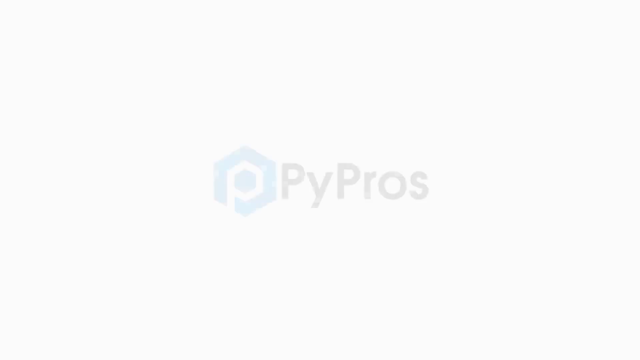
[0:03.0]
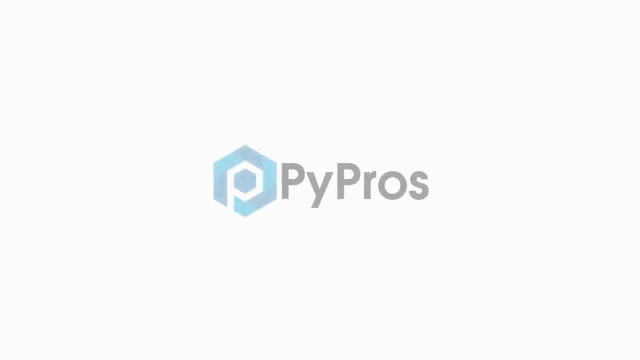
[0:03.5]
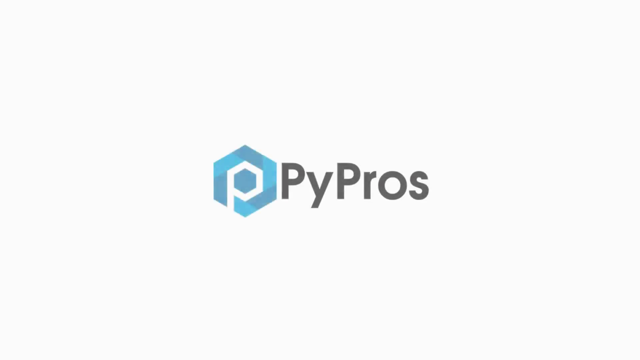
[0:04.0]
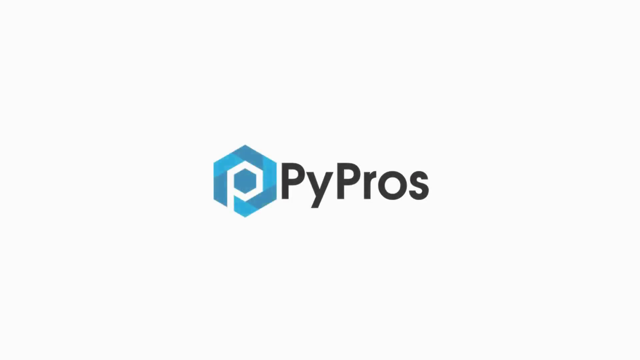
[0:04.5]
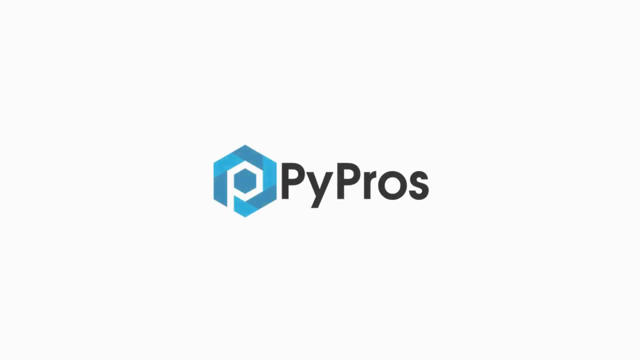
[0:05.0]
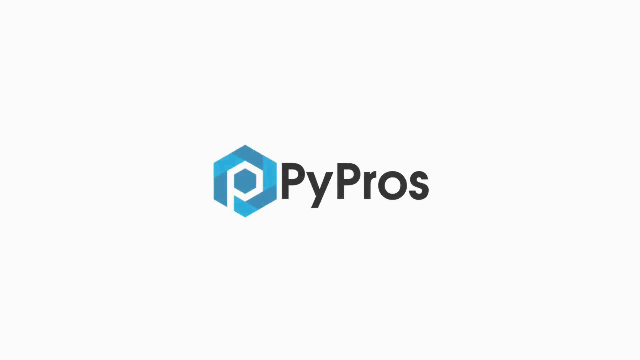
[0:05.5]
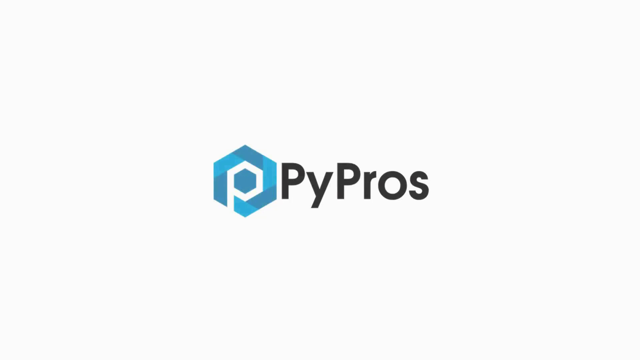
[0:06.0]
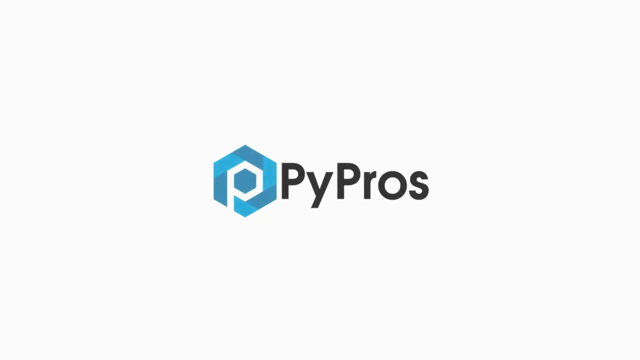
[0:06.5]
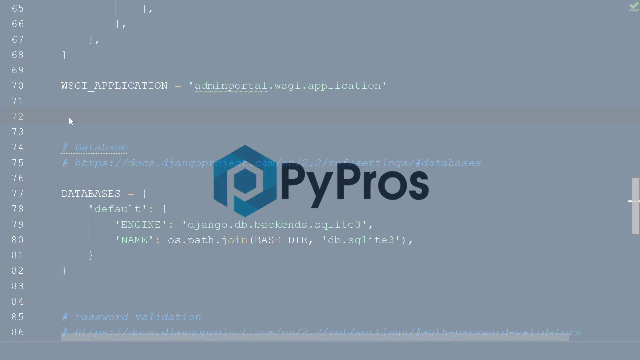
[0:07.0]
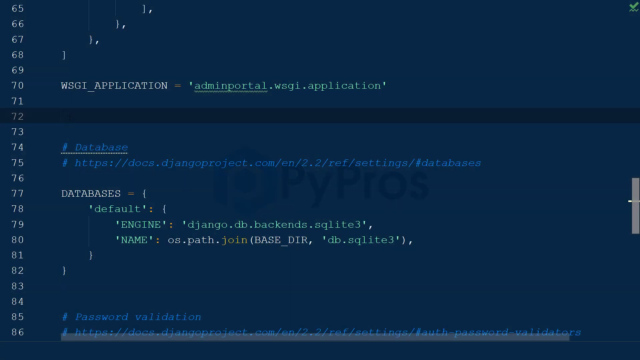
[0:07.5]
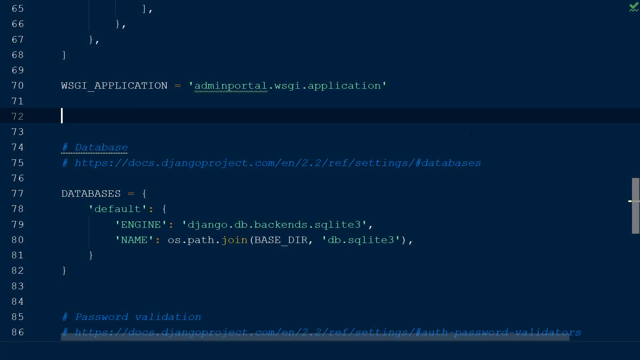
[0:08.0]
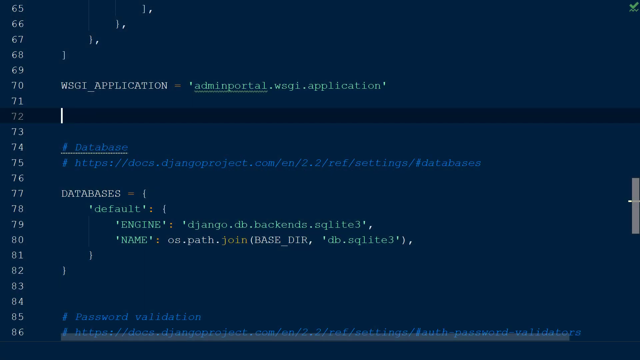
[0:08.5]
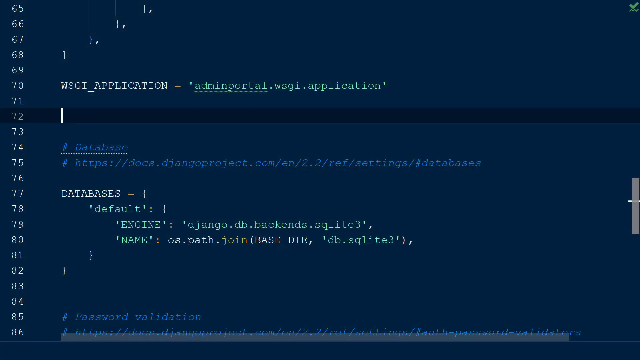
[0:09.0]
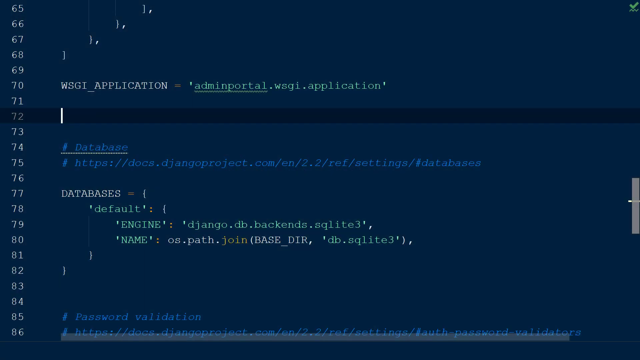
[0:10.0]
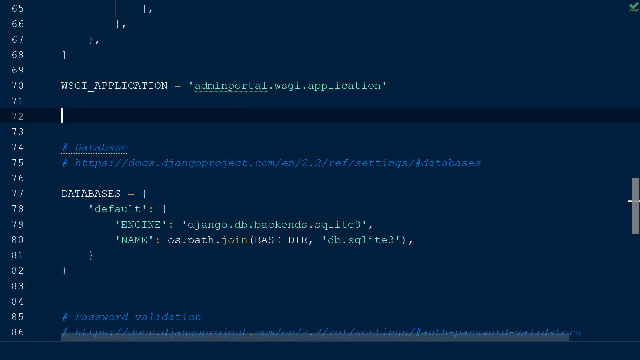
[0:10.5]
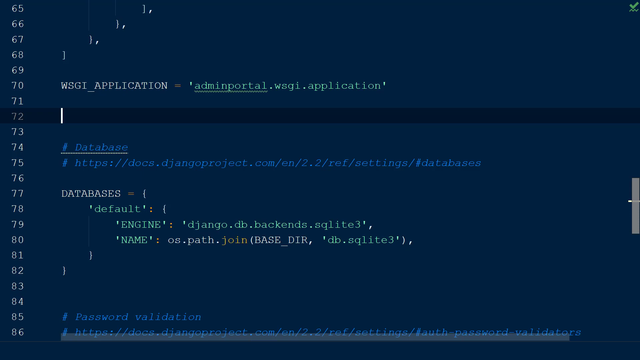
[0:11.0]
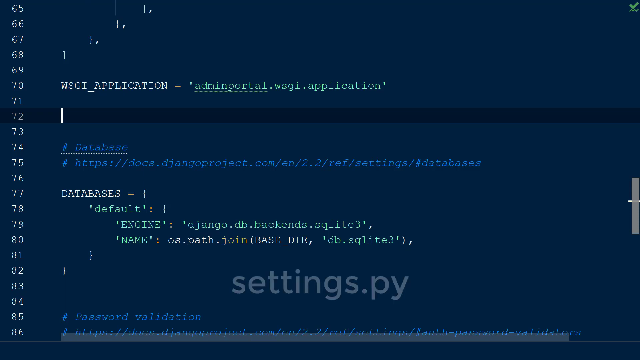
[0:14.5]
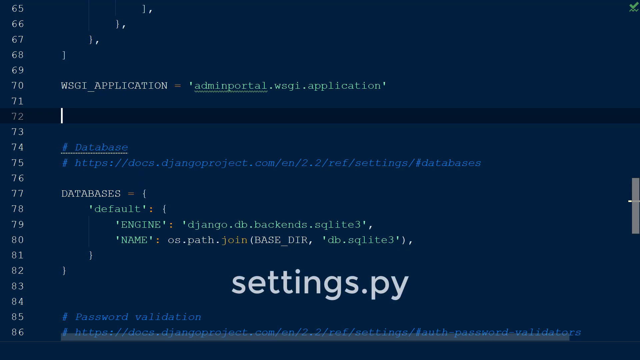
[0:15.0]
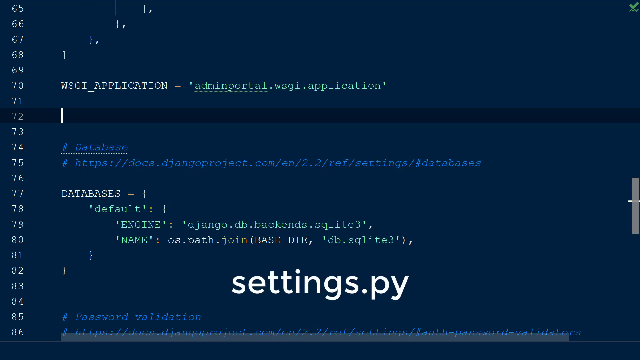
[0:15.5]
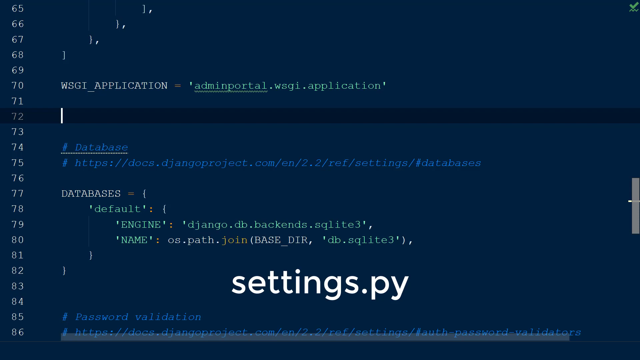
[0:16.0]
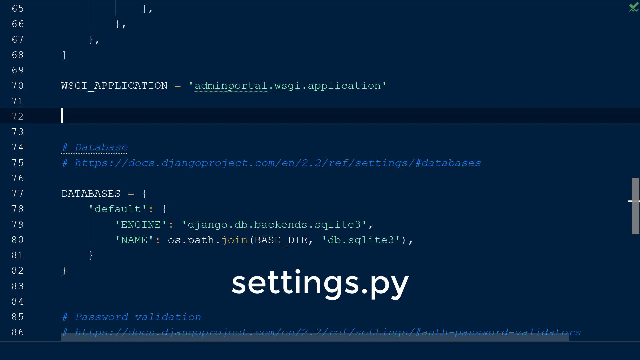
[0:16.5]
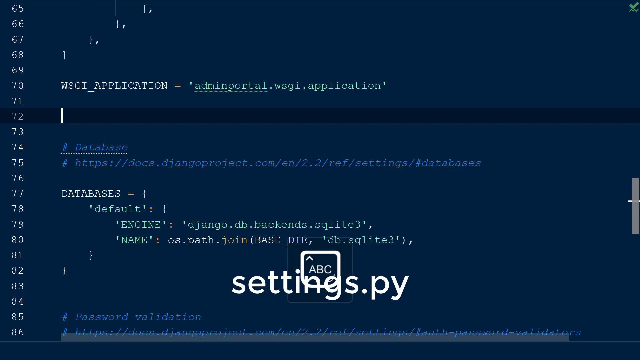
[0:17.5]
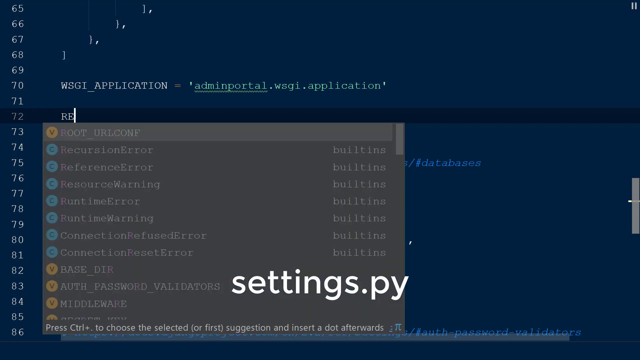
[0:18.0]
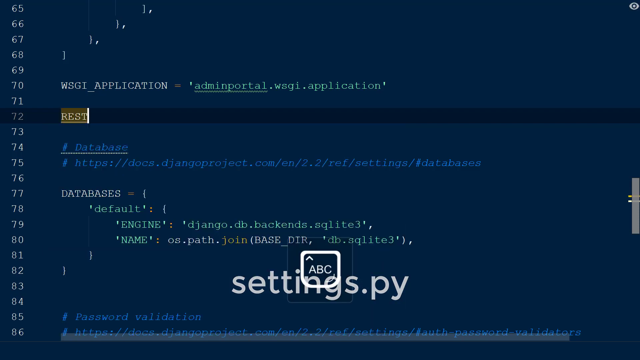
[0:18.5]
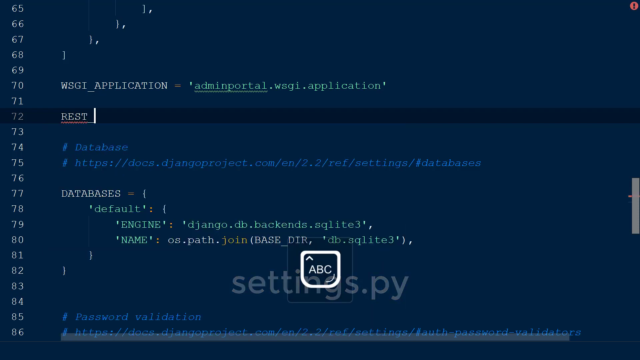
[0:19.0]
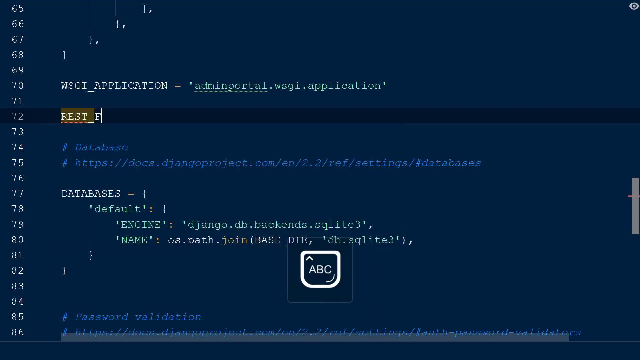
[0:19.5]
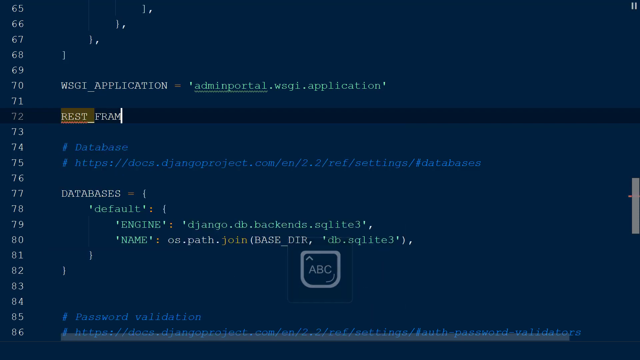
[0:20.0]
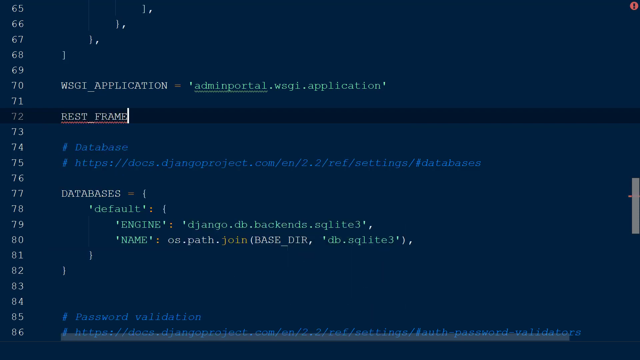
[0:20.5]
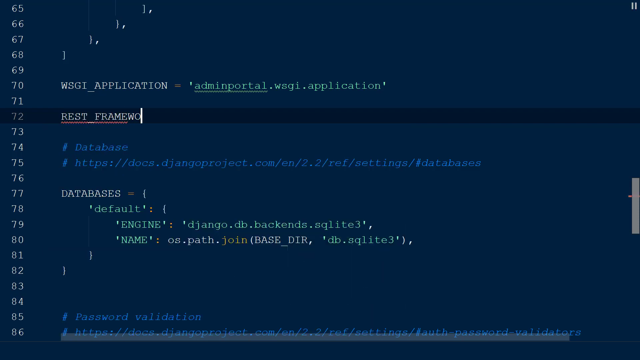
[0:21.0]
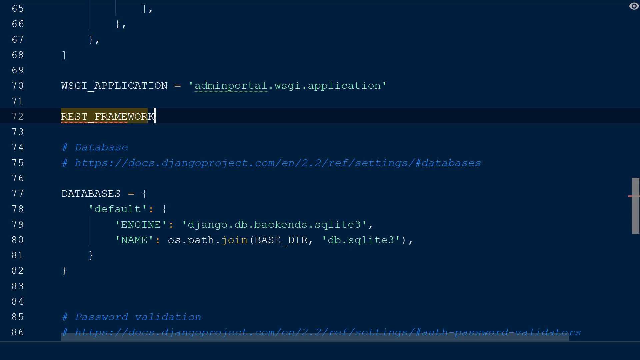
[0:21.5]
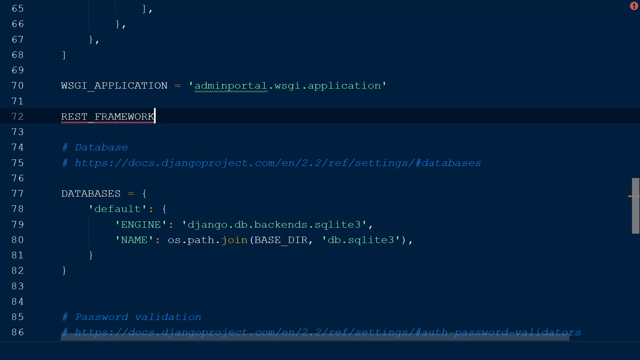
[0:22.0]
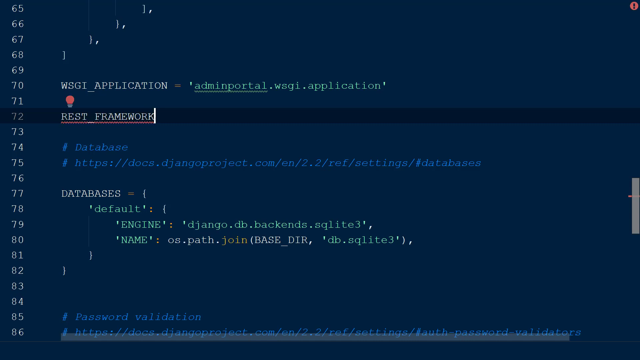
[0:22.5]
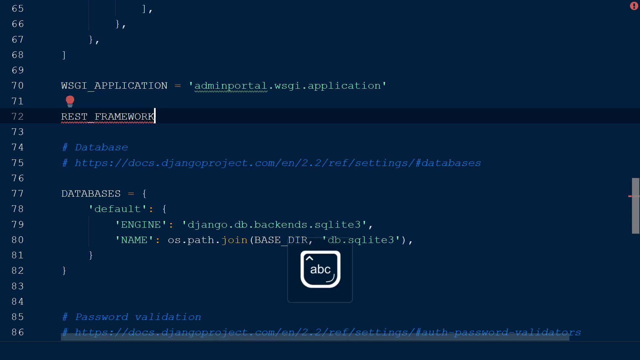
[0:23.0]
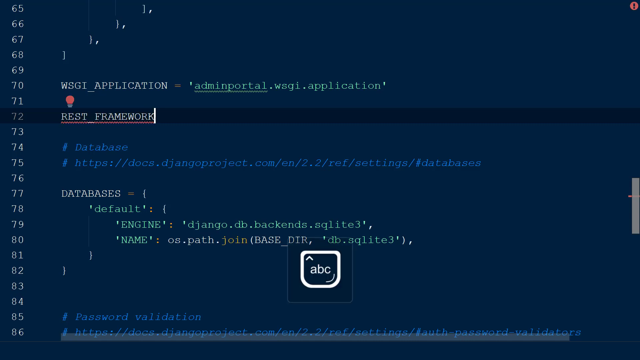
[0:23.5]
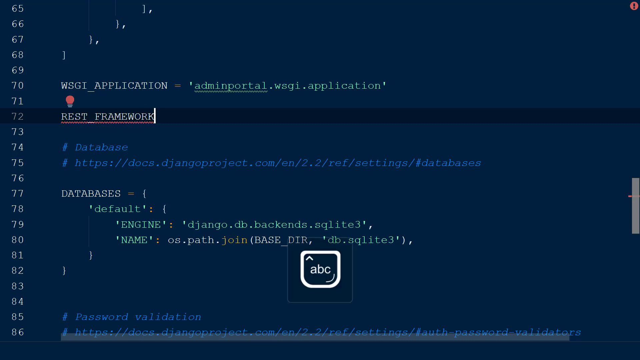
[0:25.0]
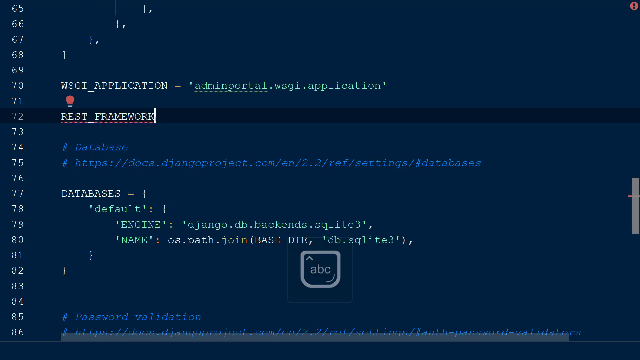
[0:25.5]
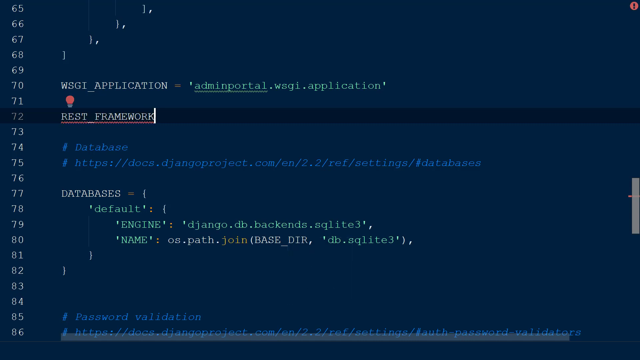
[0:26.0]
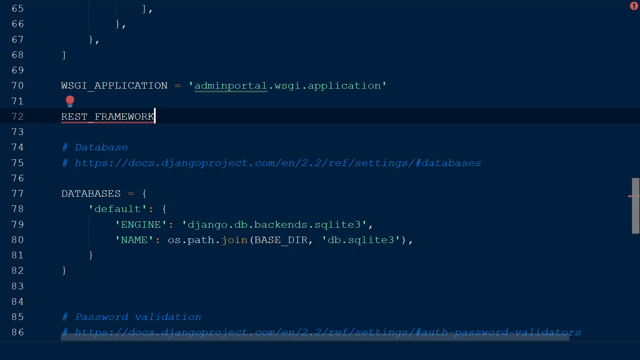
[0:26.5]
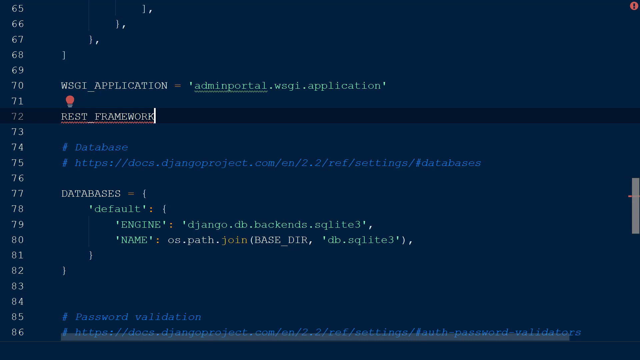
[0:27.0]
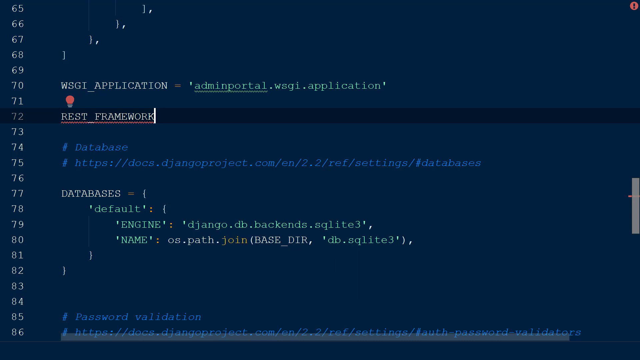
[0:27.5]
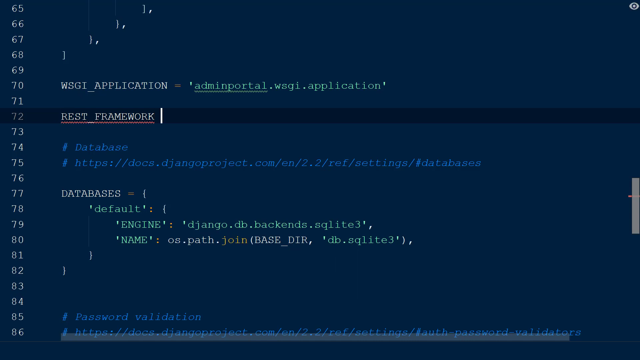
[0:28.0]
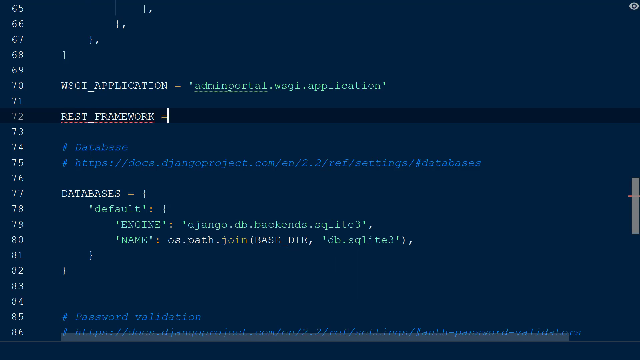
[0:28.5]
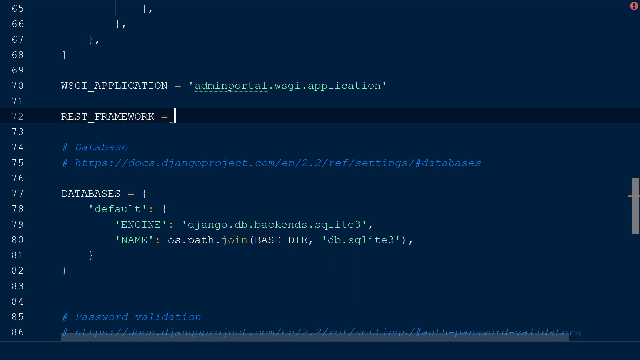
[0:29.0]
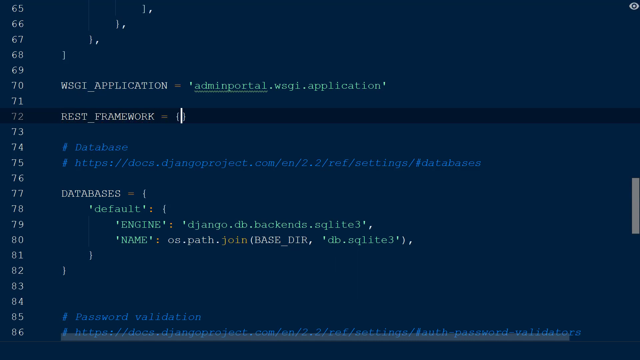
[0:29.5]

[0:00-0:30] The video opens on PYPROS and appears to be about coding. A code display shows line numbers running from 65 up to 86, and line 72 seems to be selected. A line reads "application = adminportal.wsgi.application", and there are references to a database and the REST framework. Much of the content is on a blue background. A settings.py file is visible, and the user is writing REST framework at line 72. There is also a database link with a URL beginning "https://docs."